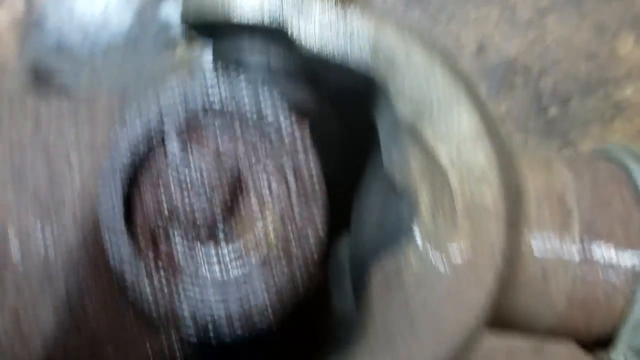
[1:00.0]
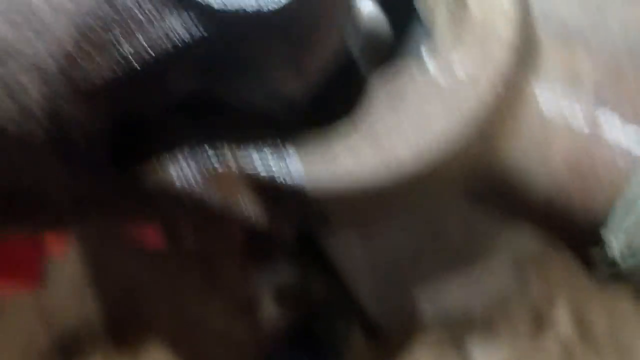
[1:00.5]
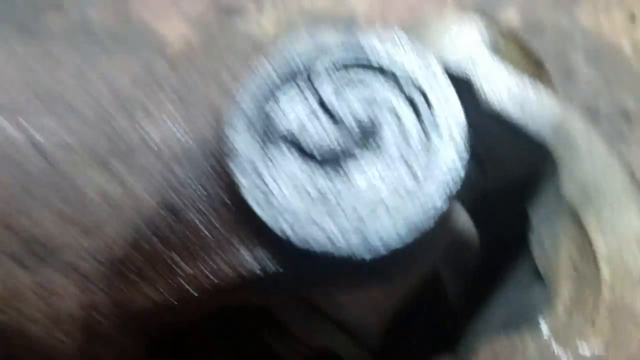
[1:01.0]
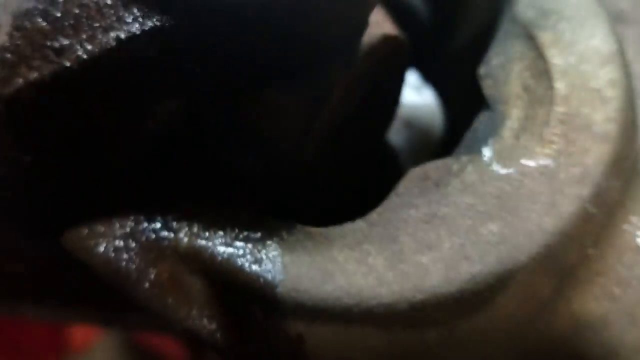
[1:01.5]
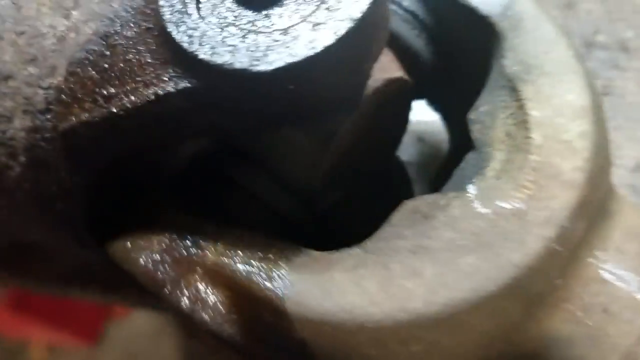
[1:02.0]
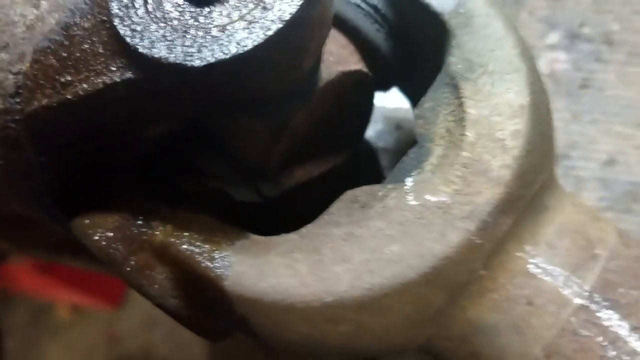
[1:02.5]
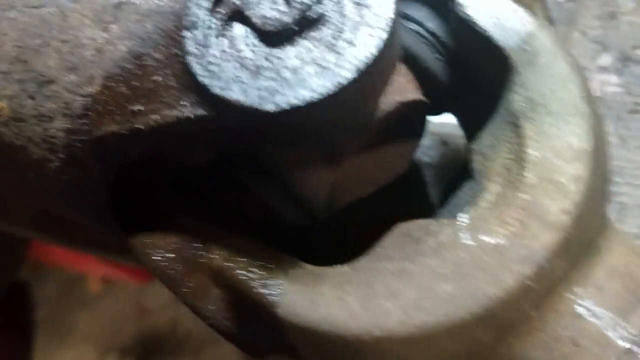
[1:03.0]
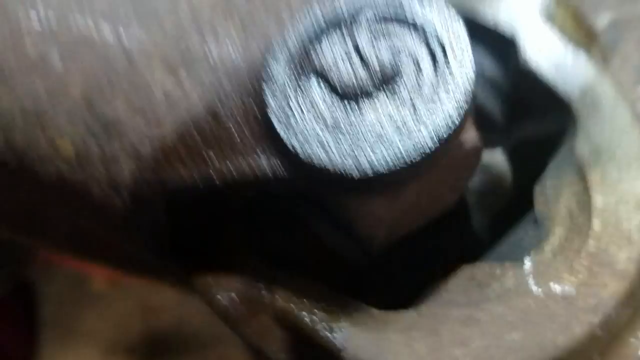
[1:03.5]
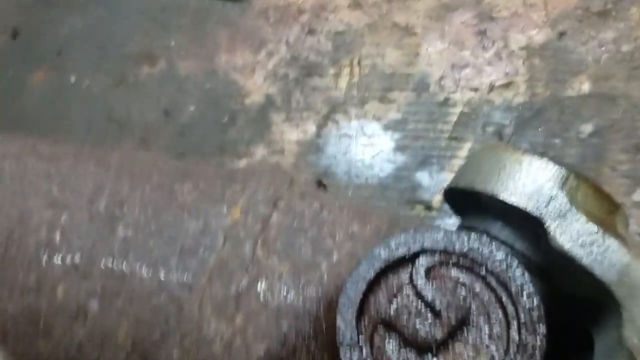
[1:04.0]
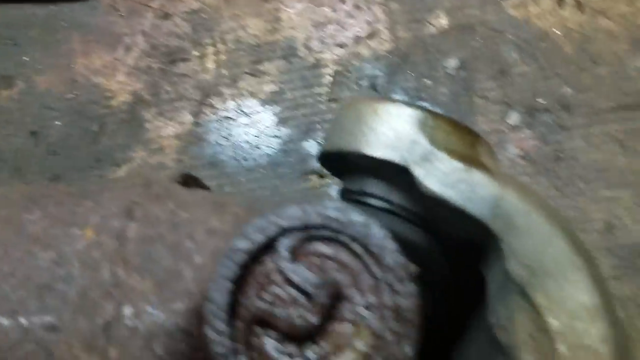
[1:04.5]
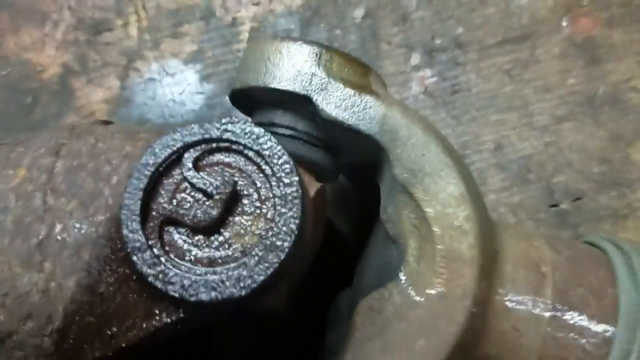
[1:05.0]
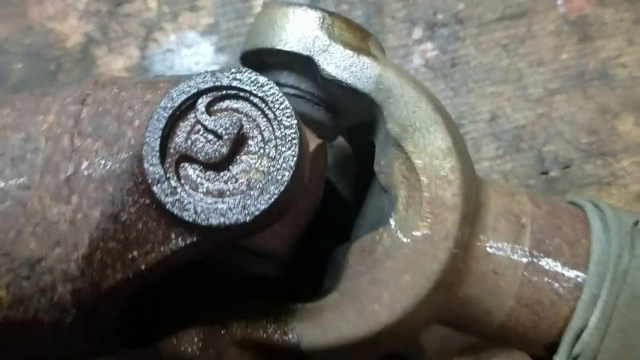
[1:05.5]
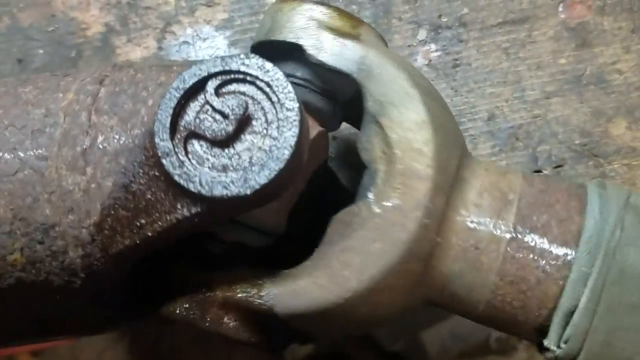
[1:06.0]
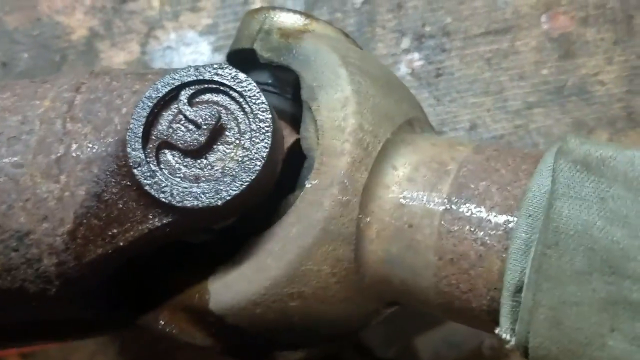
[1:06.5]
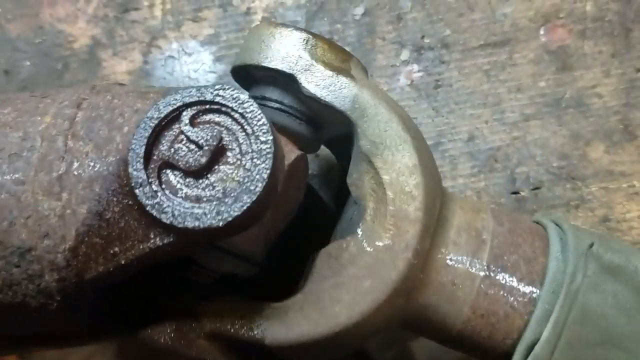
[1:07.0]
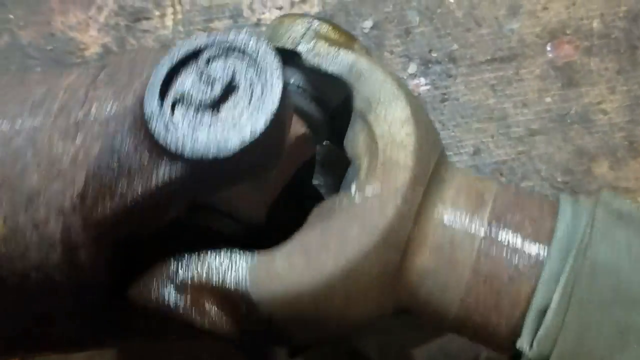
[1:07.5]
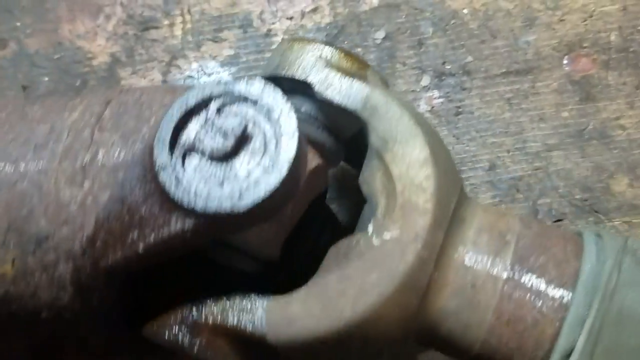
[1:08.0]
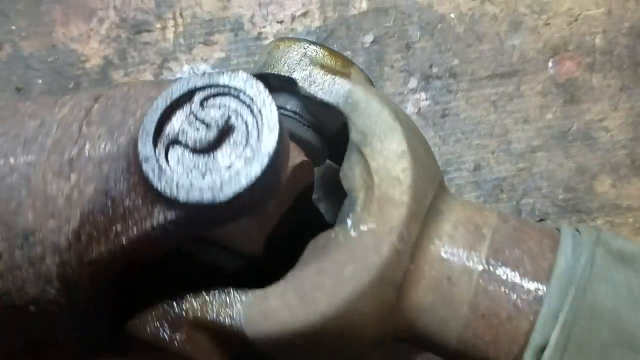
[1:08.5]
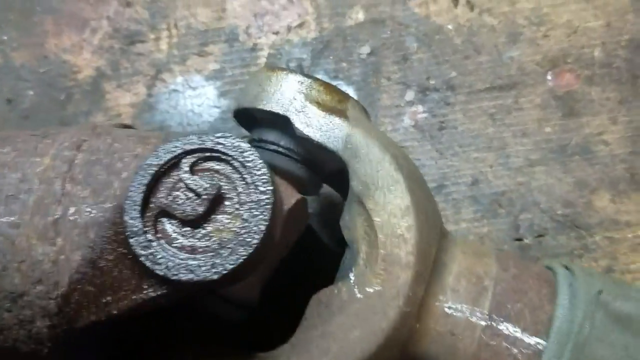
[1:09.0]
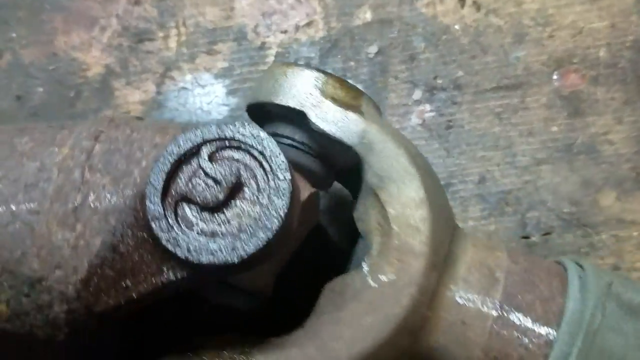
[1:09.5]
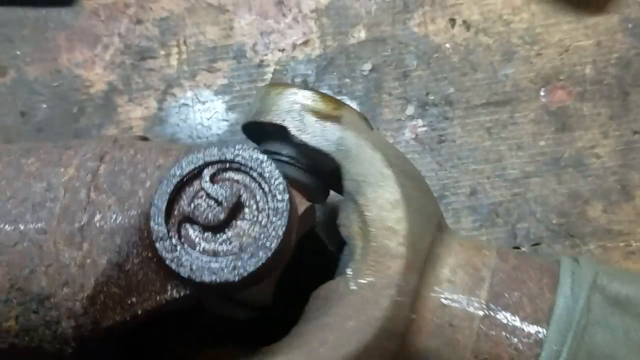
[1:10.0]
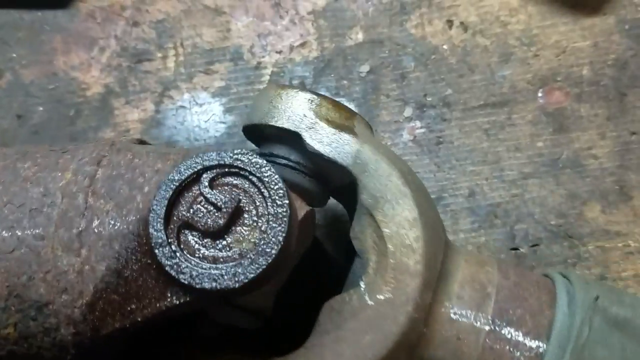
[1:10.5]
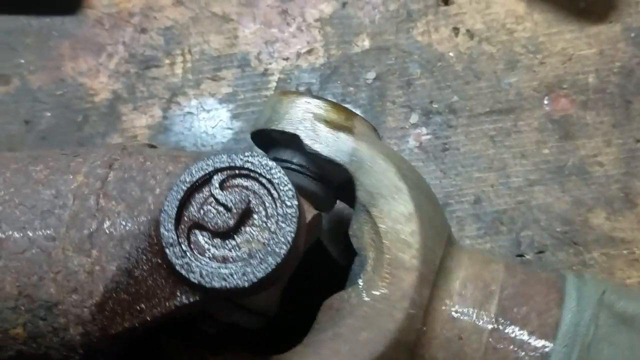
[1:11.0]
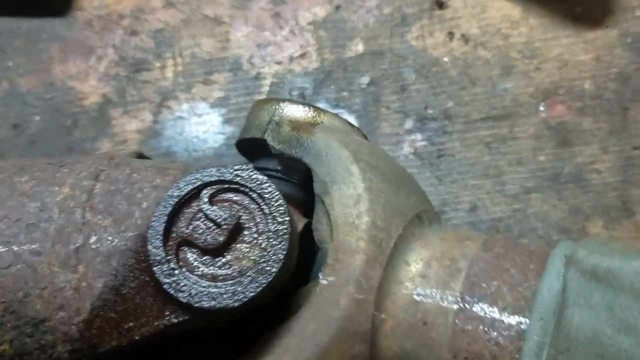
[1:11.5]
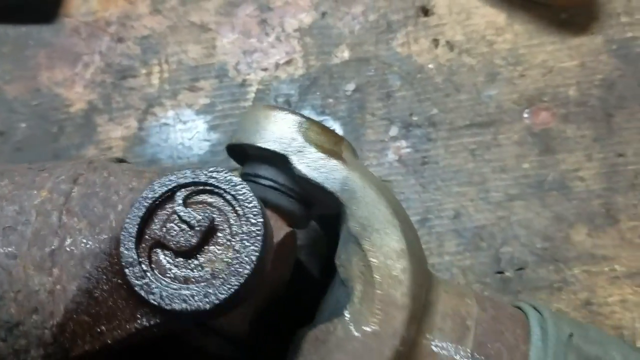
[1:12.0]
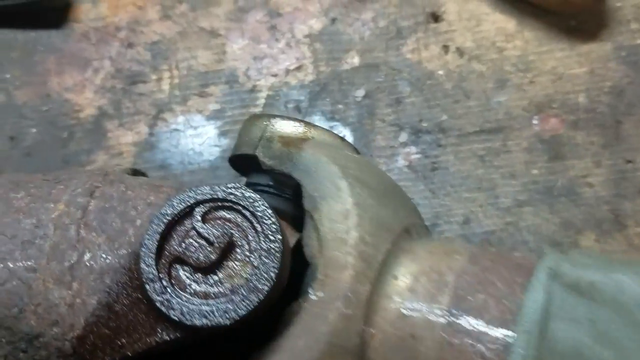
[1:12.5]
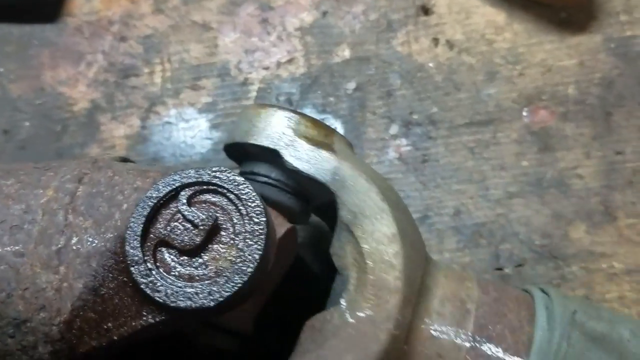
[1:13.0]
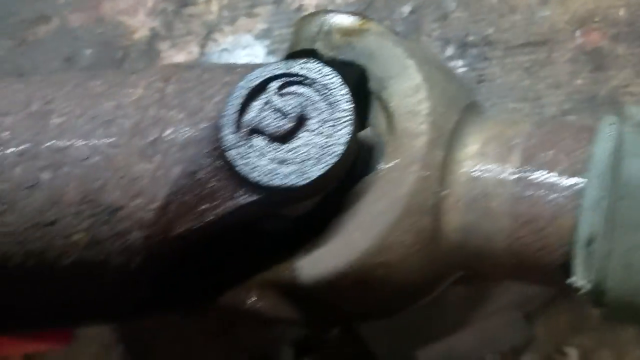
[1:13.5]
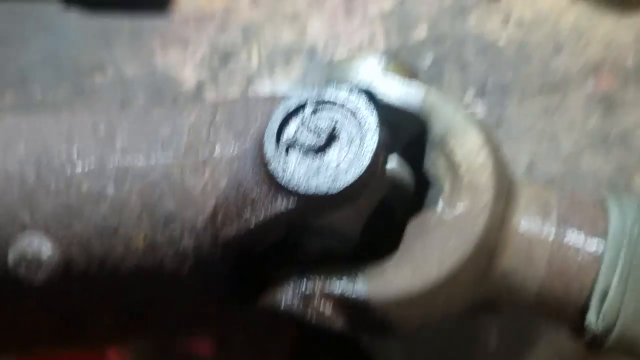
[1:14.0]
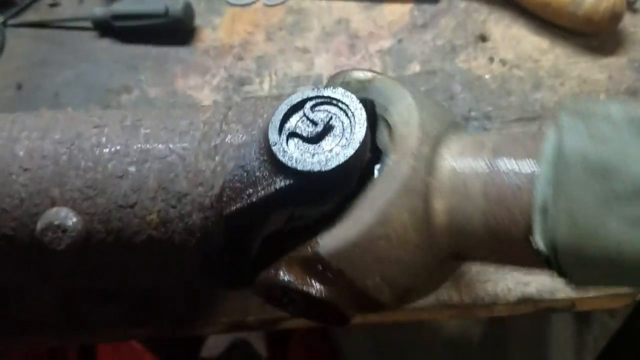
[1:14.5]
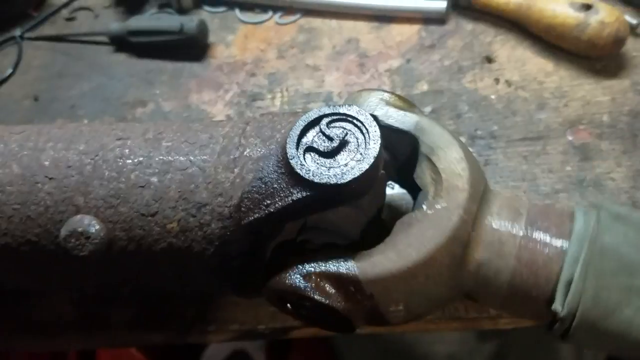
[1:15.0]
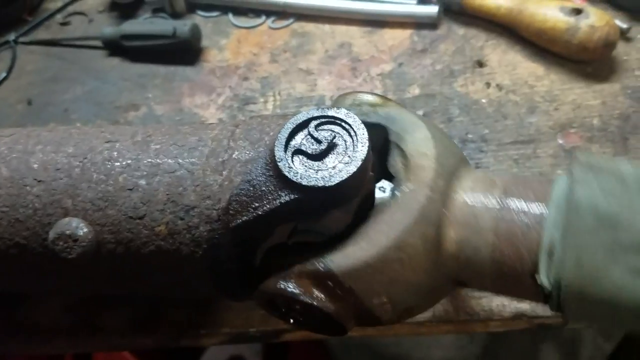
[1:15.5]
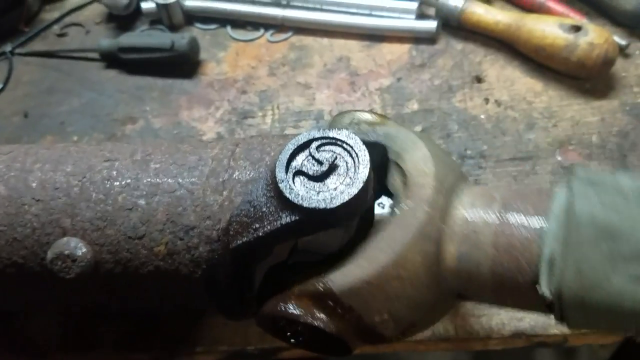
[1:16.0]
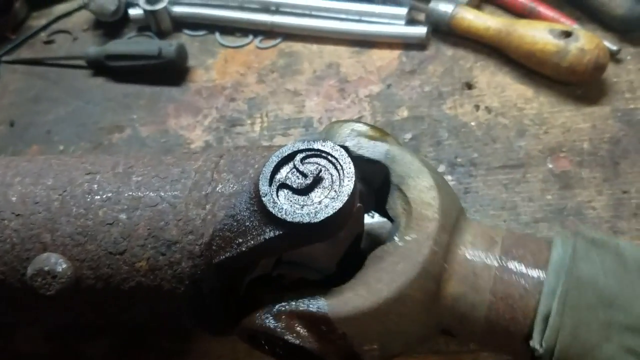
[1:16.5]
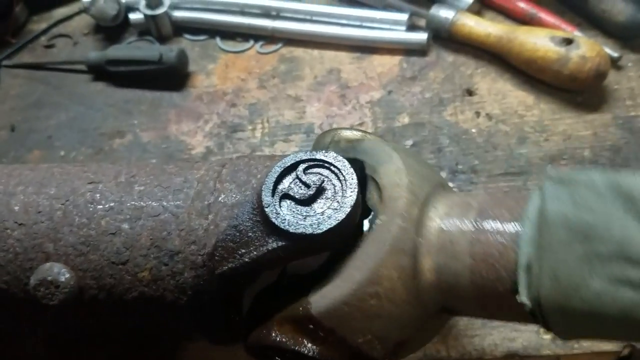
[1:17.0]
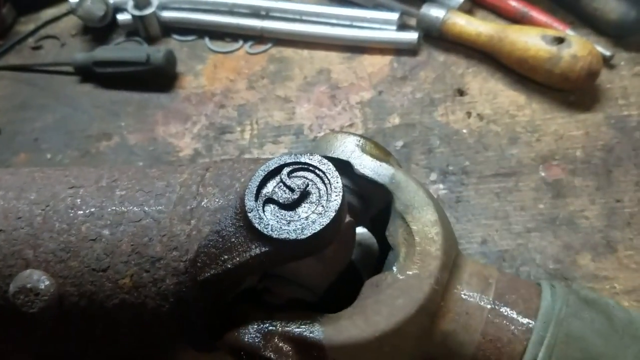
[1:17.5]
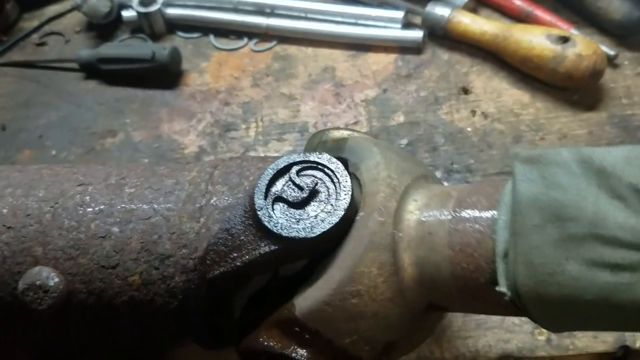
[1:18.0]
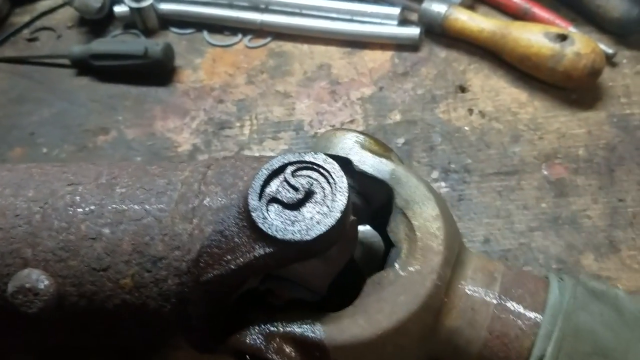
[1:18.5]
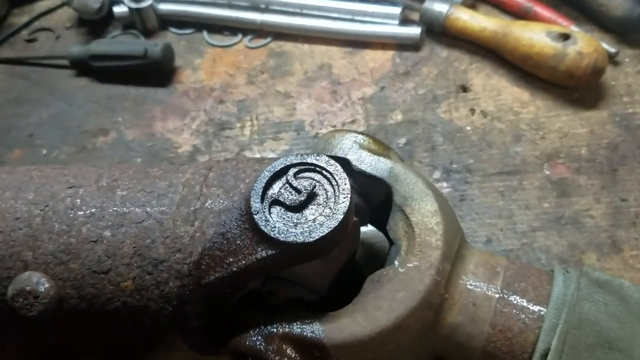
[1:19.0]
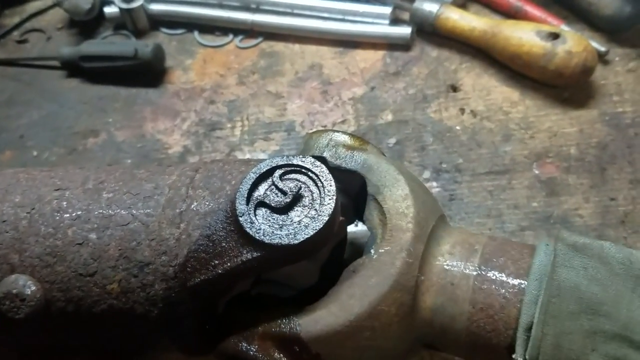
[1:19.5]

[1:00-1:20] A very close, zoomed-in view shows what appears to be some sort of shaft element, focused on the center area of the metal section where the joint connects the two pieces. Once the camera pans back out and stabilizes, the right side arm begins to lift up and down; it moves fairly freely but appears to have some hang-up and is not moving as freely as it should. The camera pans out a bit more, and the right arm moves up and down continuously and very slowly before stopping, then moves back inward and rests on the table section once again.